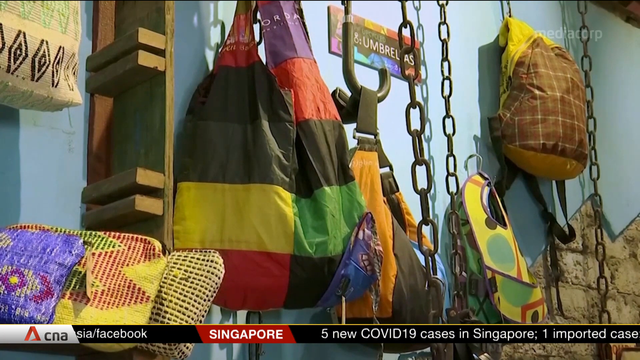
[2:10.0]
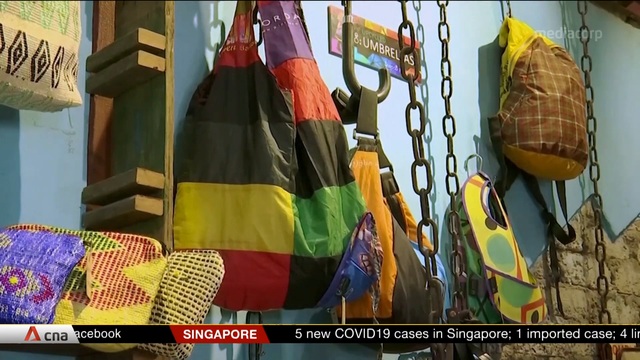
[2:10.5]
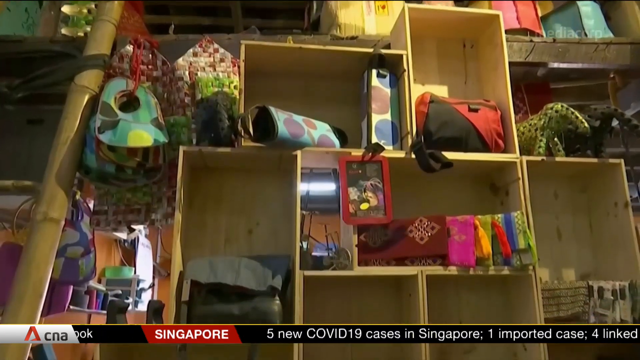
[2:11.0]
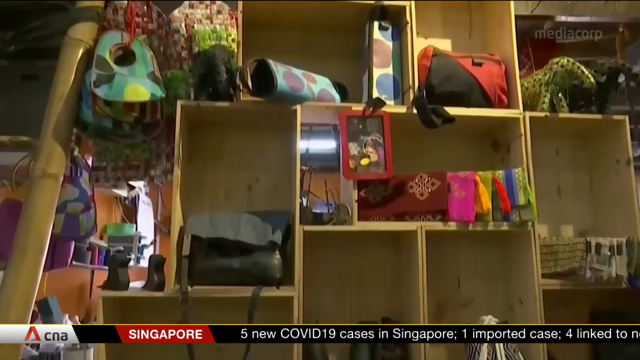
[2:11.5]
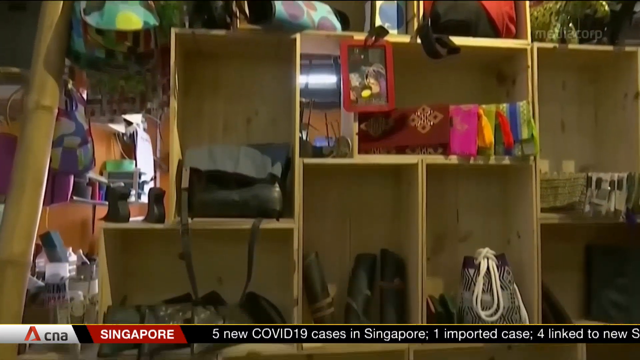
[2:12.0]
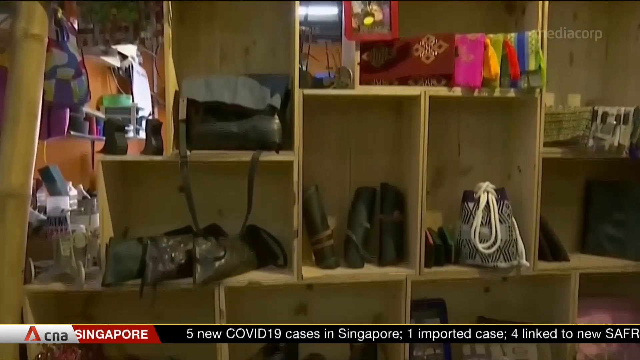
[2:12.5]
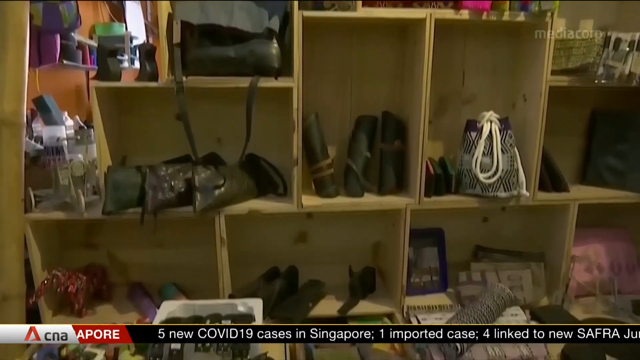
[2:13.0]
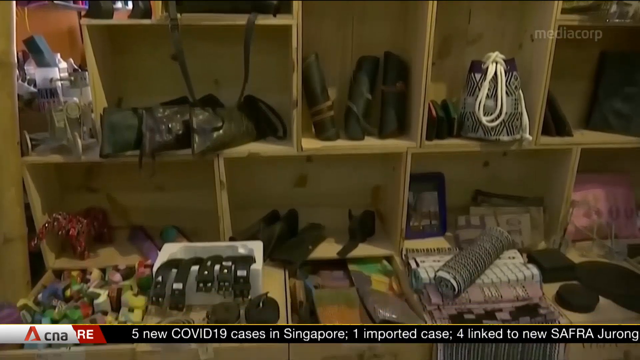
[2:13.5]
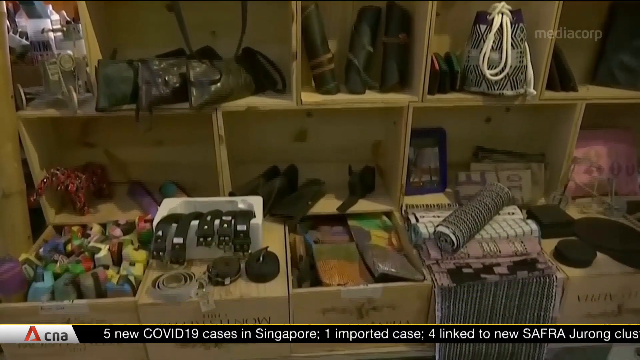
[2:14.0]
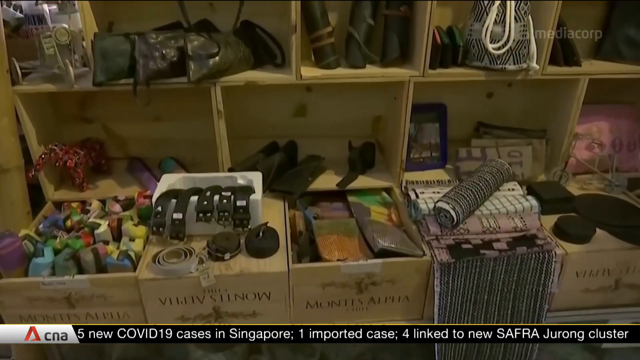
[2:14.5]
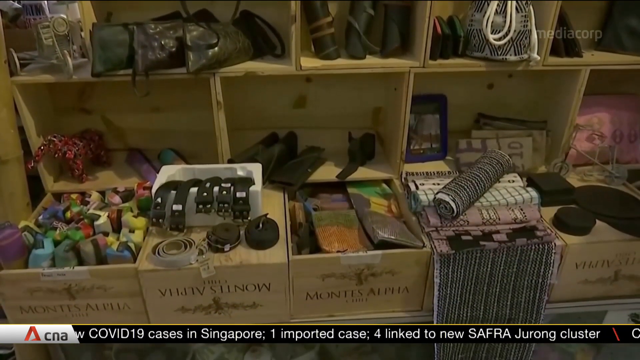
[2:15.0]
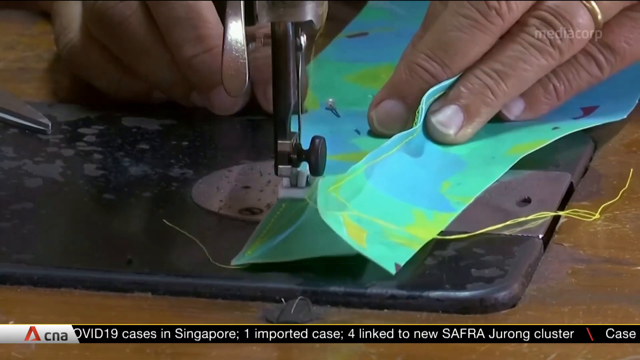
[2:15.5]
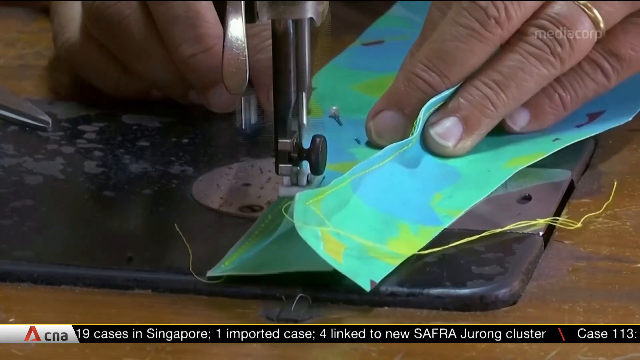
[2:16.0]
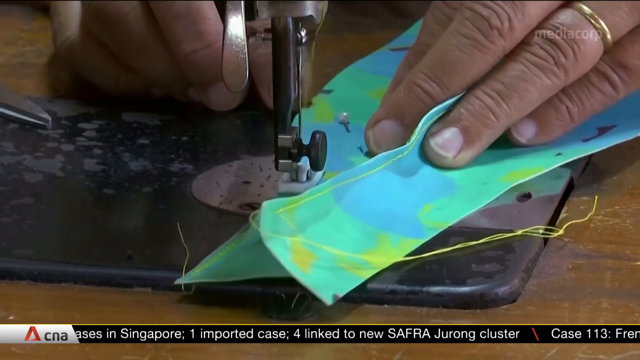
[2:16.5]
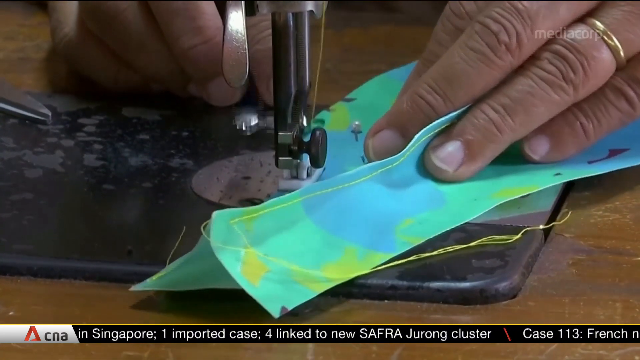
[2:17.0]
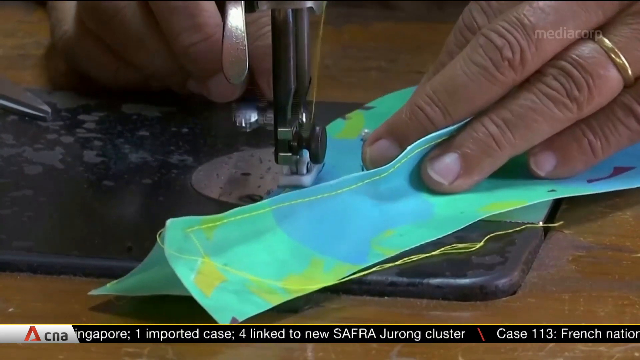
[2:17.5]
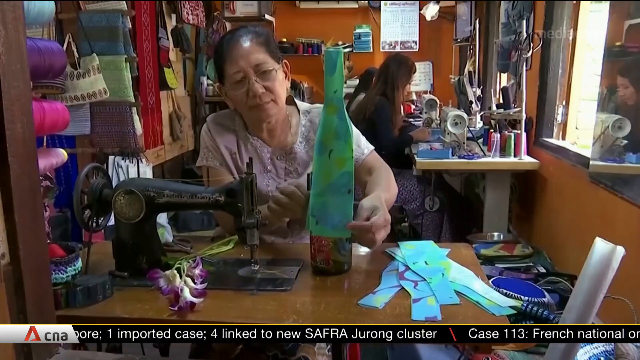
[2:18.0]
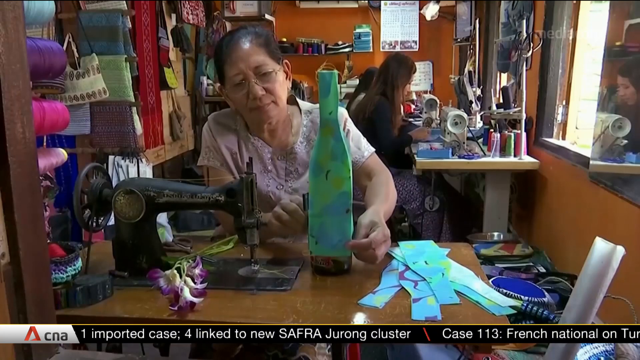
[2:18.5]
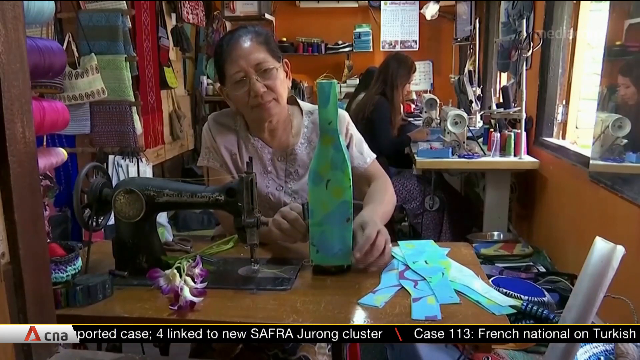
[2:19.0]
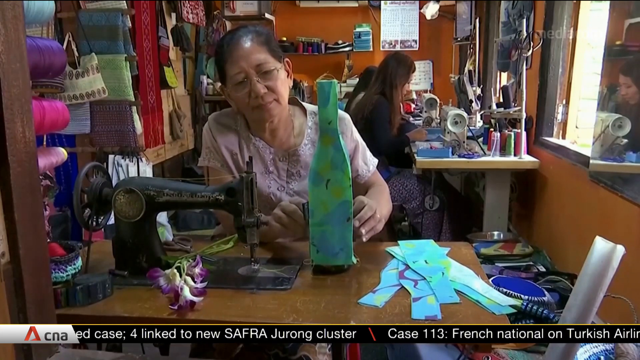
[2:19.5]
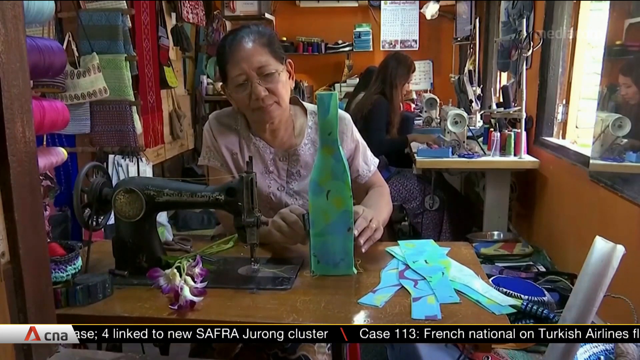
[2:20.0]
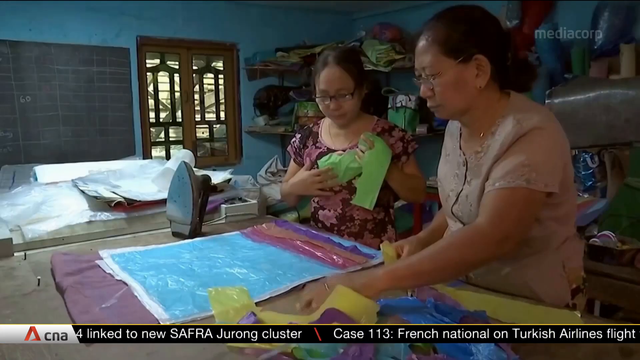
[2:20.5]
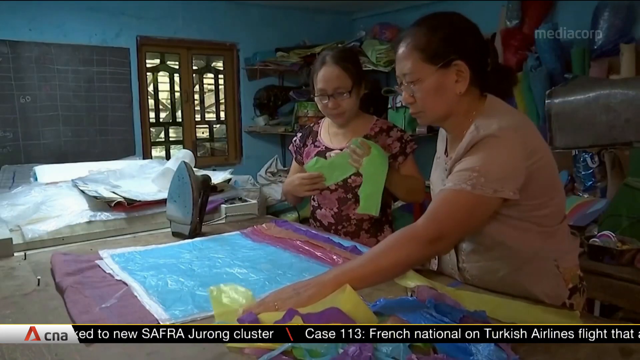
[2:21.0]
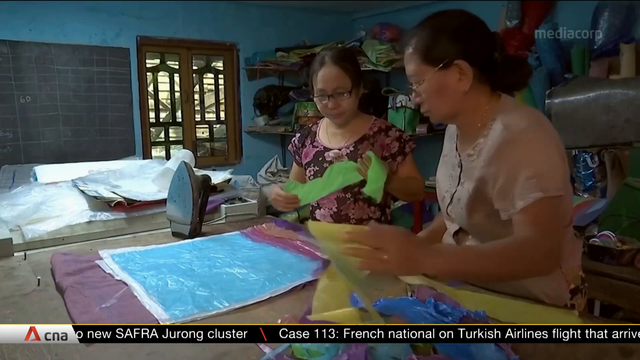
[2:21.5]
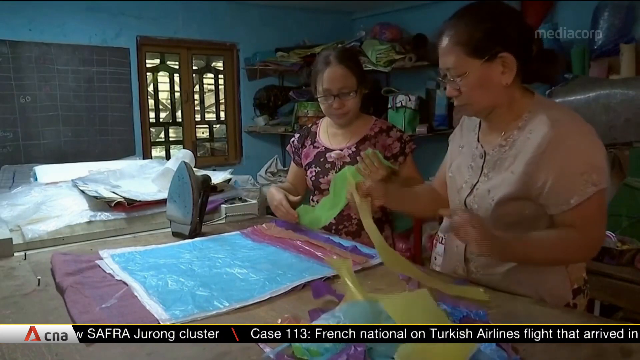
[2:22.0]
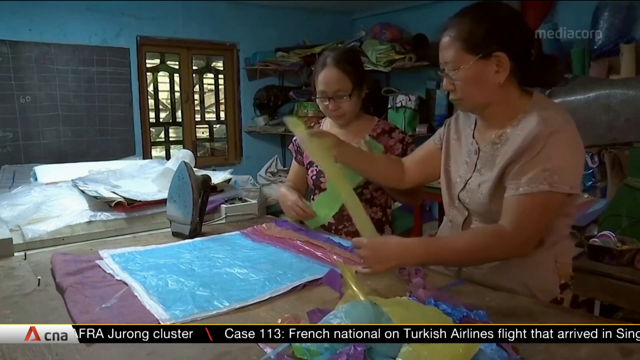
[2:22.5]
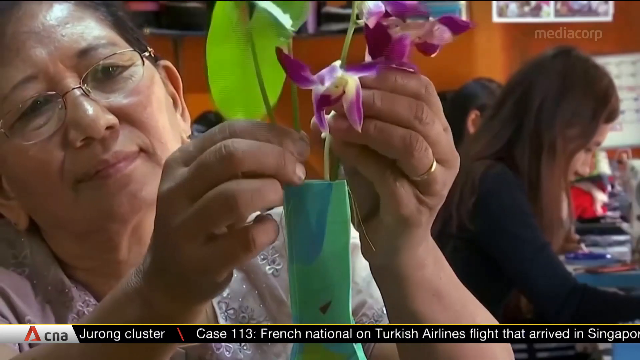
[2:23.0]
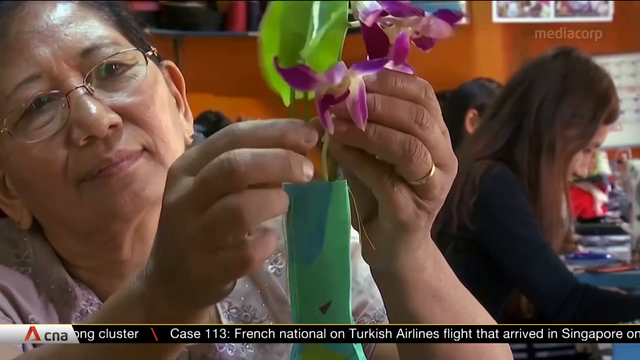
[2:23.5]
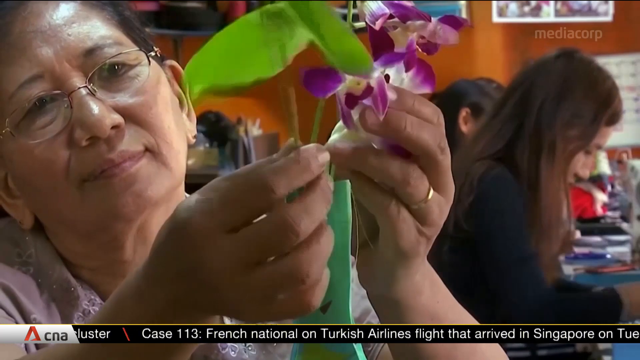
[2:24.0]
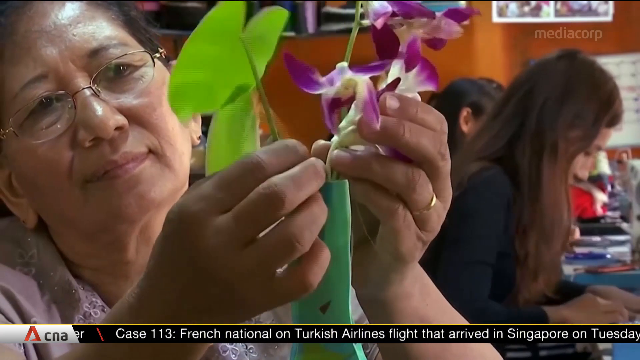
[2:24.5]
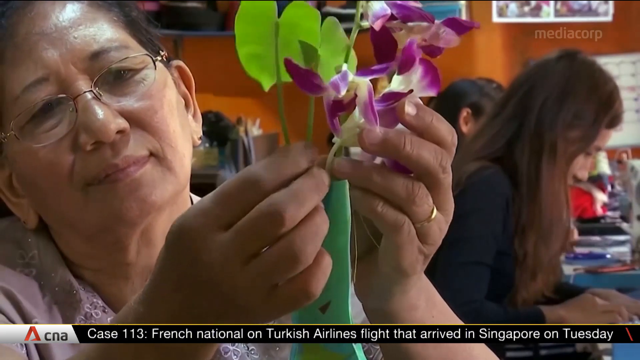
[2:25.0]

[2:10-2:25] The shop sells items the women created themselves, such as bags in different colors; some bags mix red, yellow, black and gray in the same bag. A view of the store shows different items. A person is sewing a bag, which seems to be a bag for a bottle, like a champagne bottle. Two women are both sewing, each with a machine in front of them: a black sewing machine, with a white sewing machine at the back. Papers are put together to decorate, and a flower bag is also shown.